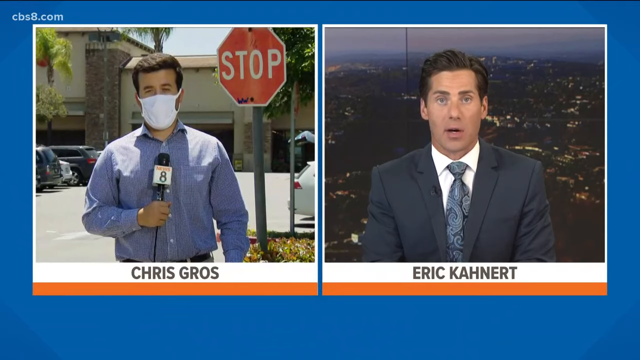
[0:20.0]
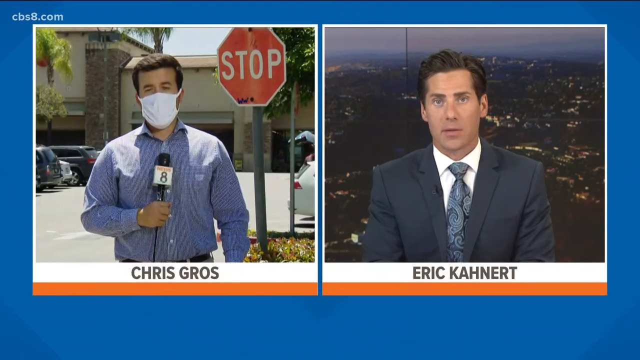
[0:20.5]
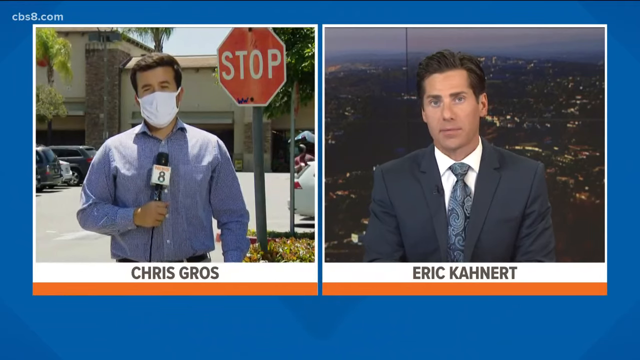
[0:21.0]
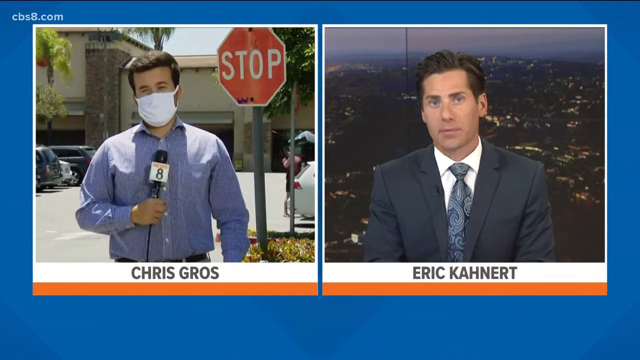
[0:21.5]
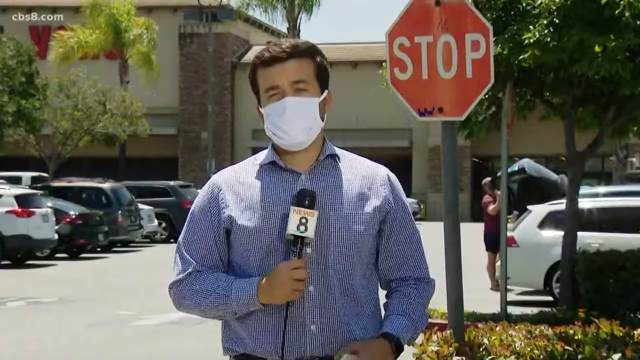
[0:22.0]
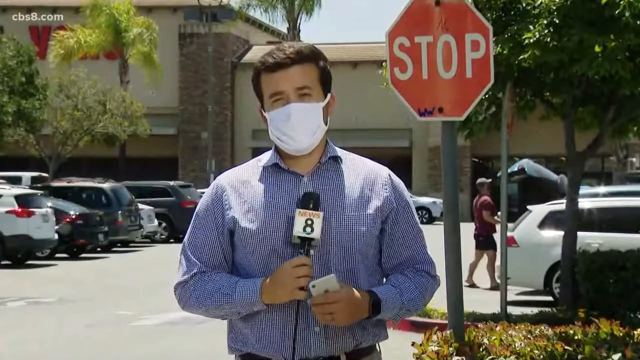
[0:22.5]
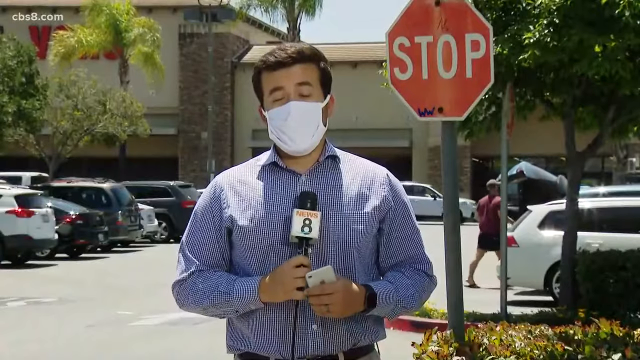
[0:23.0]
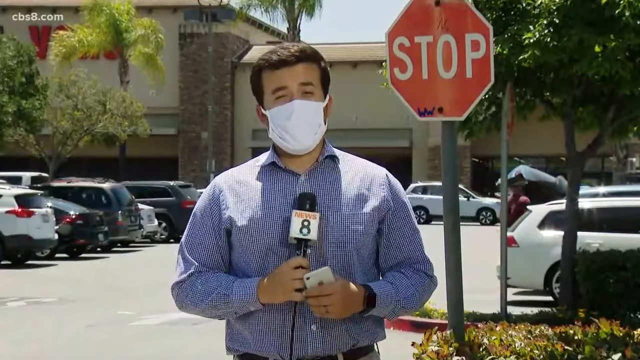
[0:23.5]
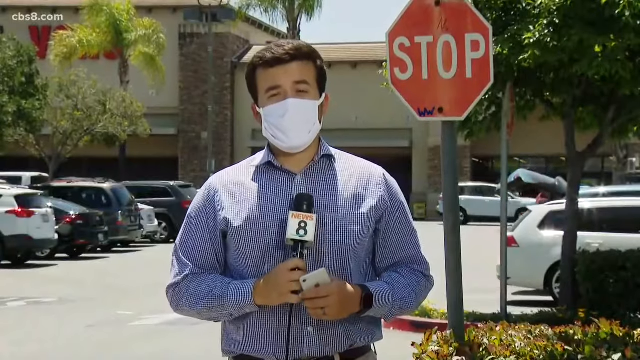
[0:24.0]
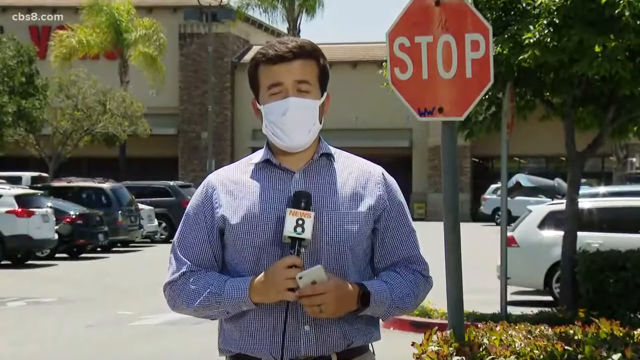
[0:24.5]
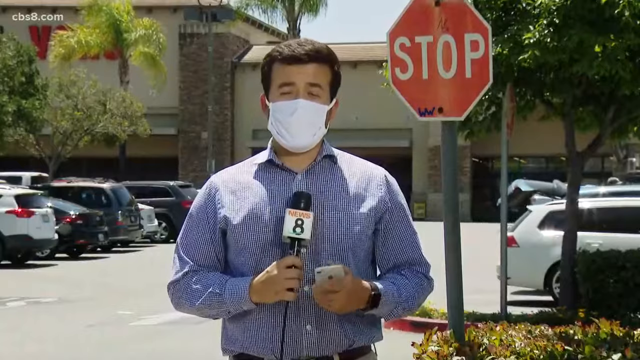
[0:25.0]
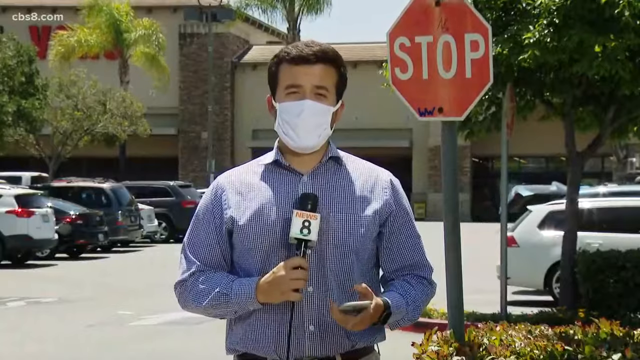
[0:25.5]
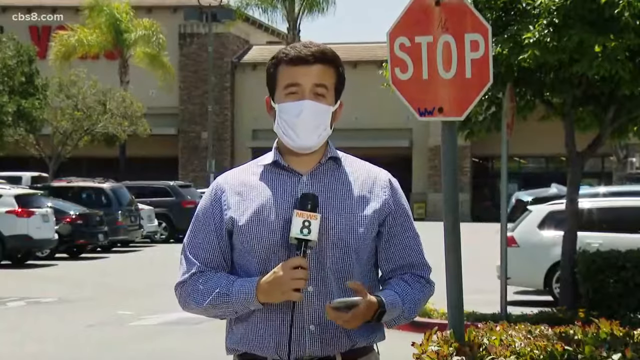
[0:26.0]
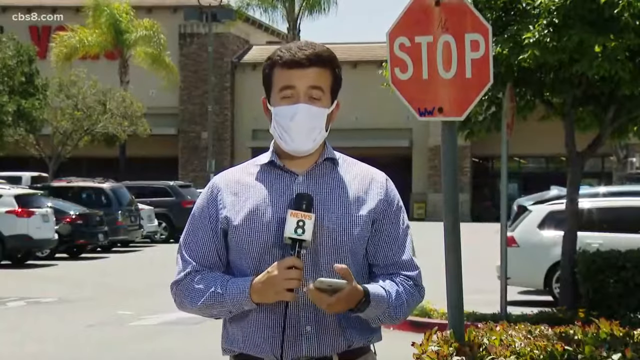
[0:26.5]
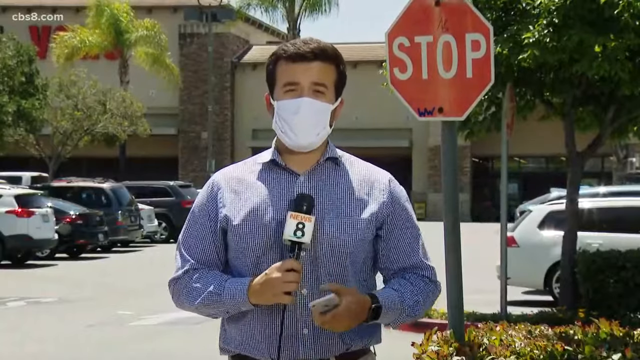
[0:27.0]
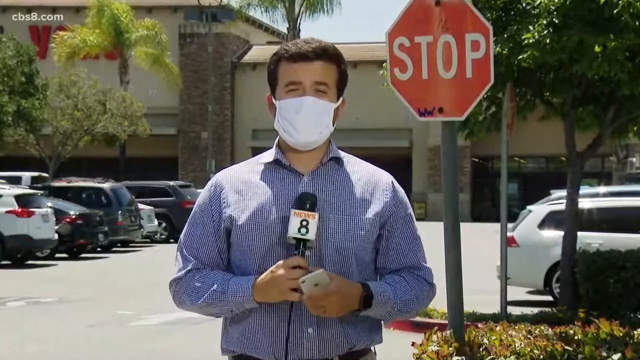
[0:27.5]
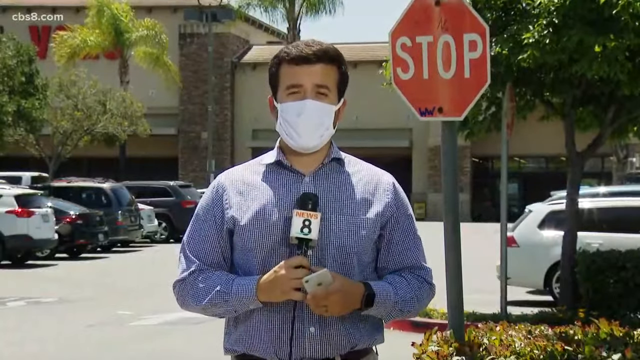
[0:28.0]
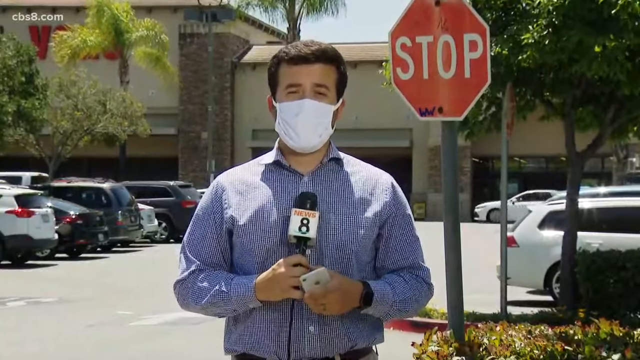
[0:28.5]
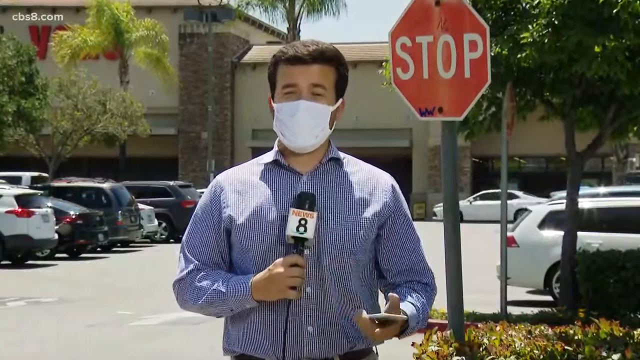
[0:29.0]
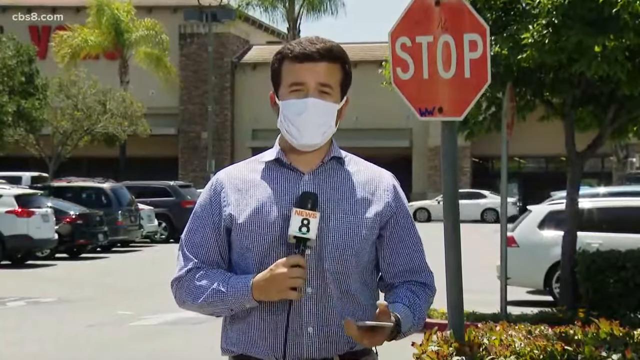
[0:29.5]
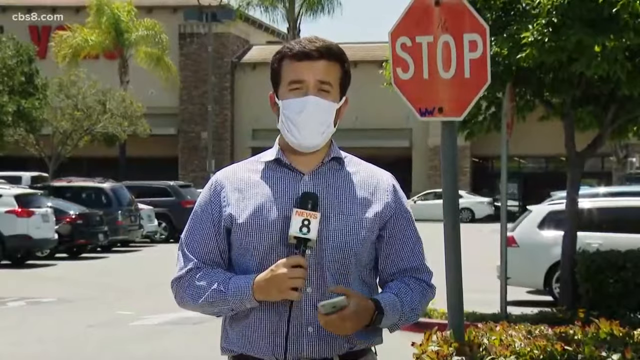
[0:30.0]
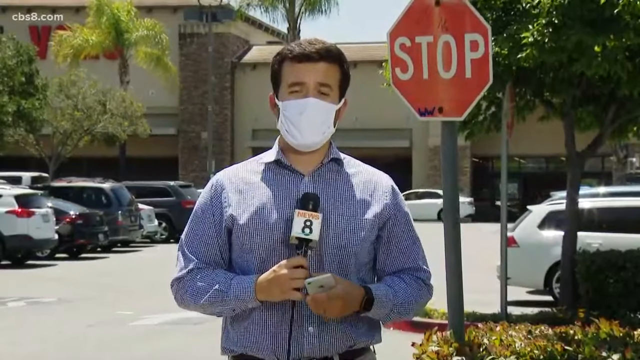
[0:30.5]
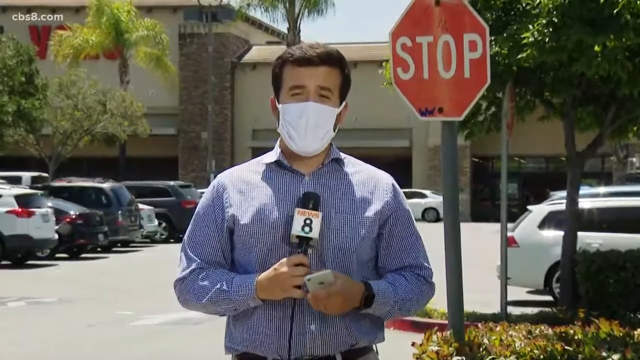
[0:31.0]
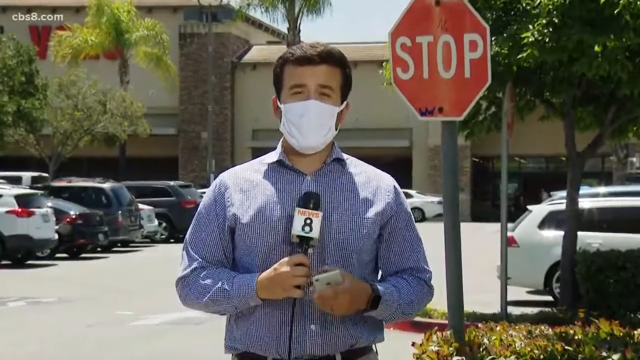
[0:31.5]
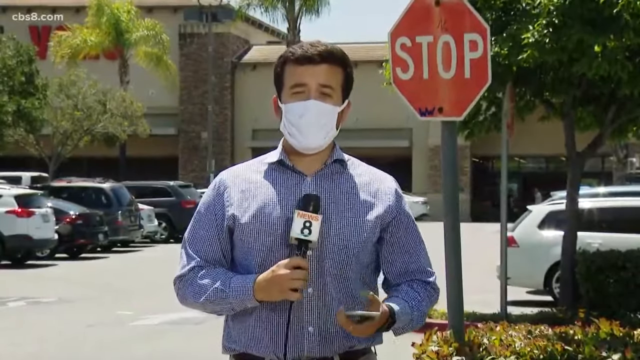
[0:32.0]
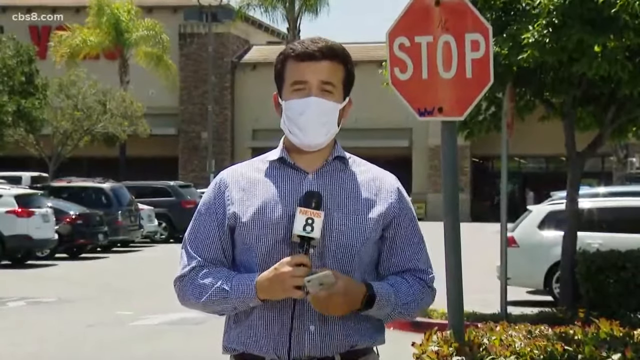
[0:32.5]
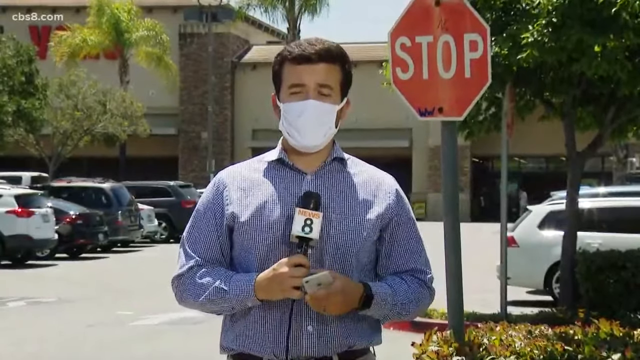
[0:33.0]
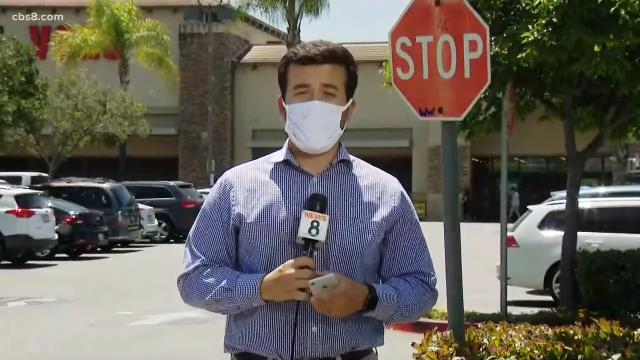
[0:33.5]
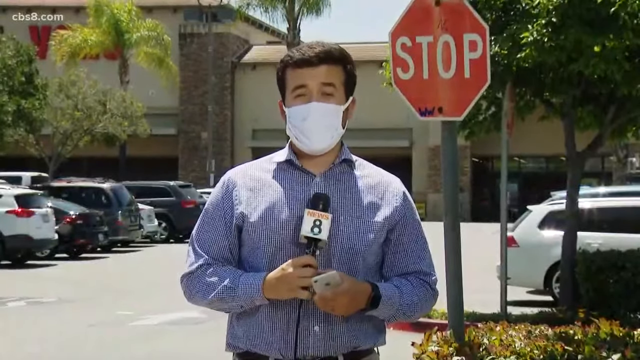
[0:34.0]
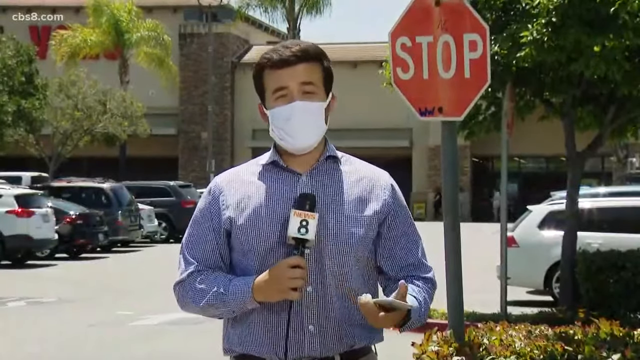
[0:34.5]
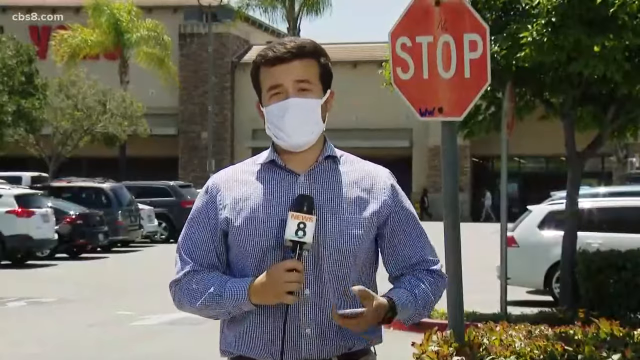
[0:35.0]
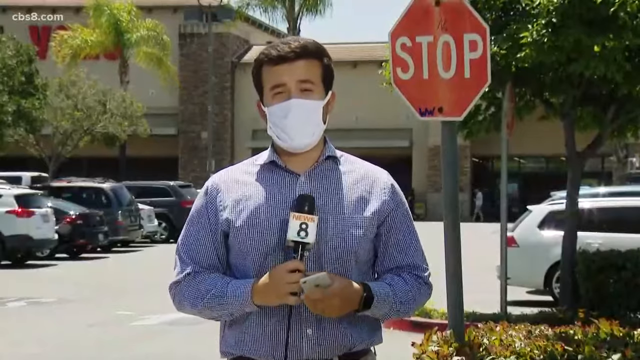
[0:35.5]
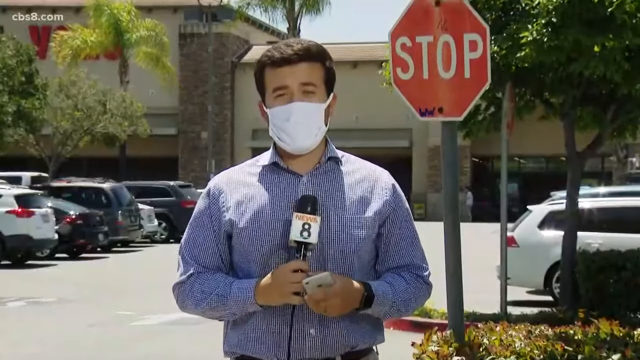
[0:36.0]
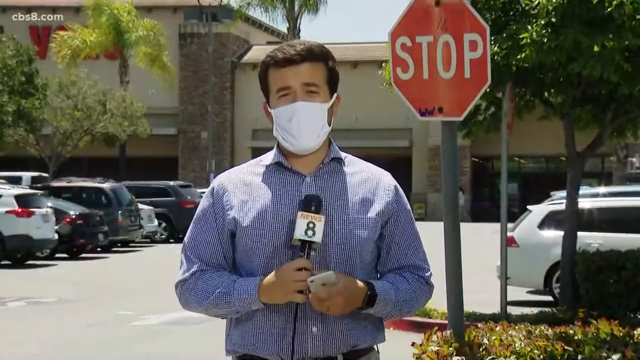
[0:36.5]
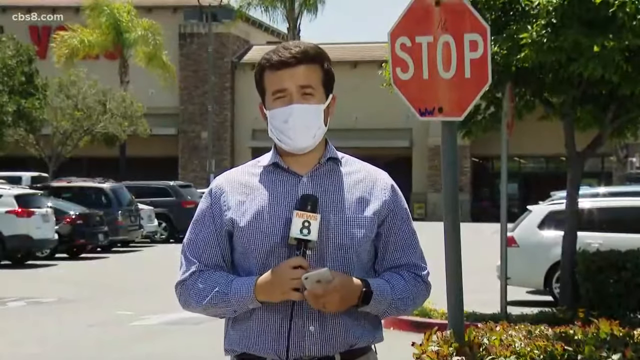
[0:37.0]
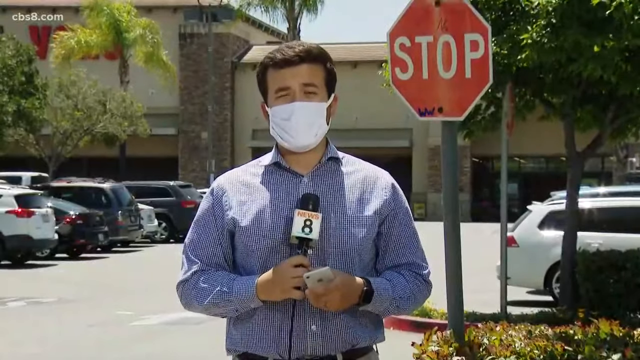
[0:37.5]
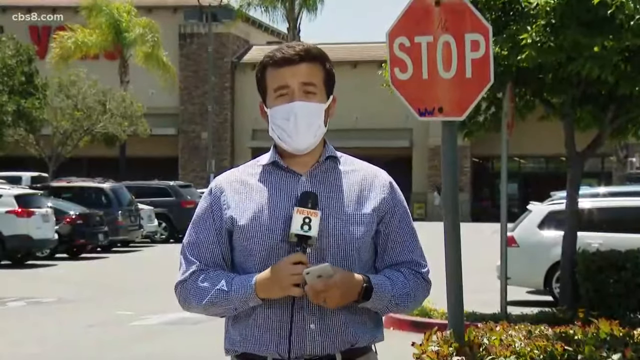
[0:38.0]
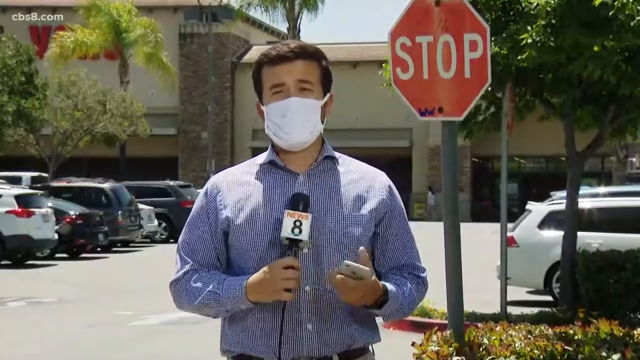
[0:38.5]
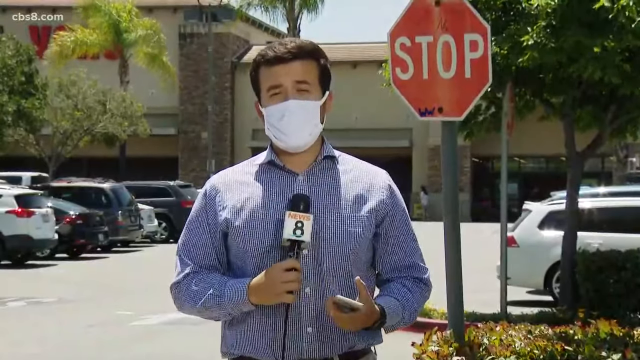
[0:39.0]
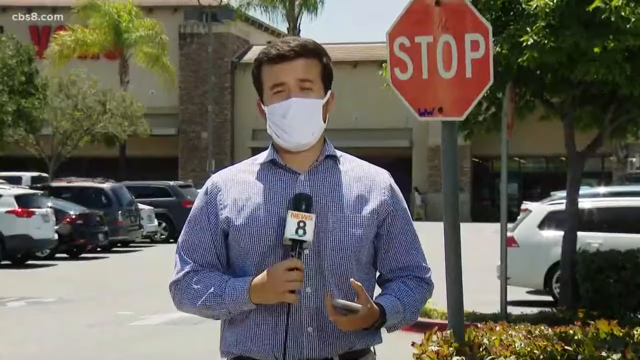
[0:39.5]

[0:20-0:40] Both reporters are shown side by side. The man on the right is the reporter from earlier; he is indoors, sitting in front of a backdrop of the city. The man on the left is outside, standing in front of a stop sign and probably in front of the grocery store where the man with the KKK hood was. He wears a white mask. There are multiple cars in the parking lot; one car moves to the right, and someone shuts a car's trunk as the man talks. Multiple trees are in the background in front of the store. The store's name can only somewhat be made out; it looks like a sign in red. The video stays on him to the end of the segment.